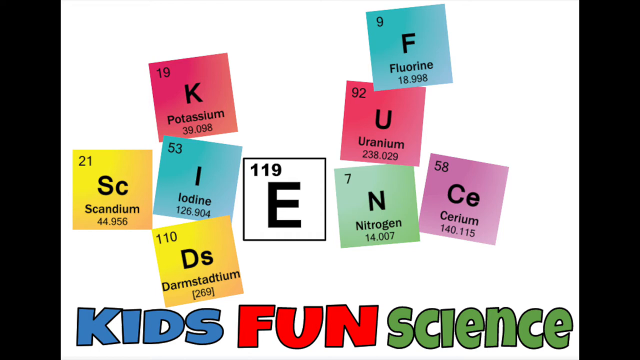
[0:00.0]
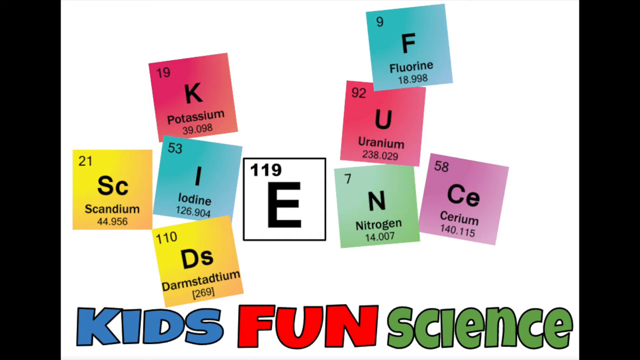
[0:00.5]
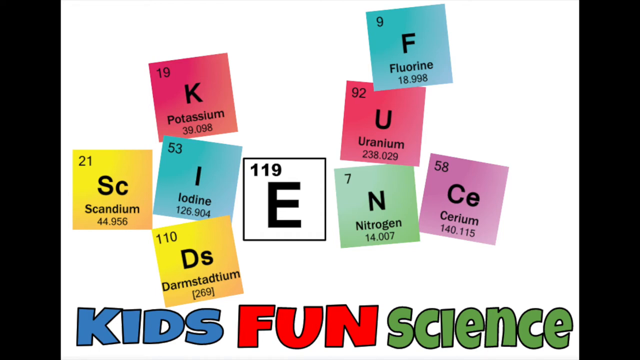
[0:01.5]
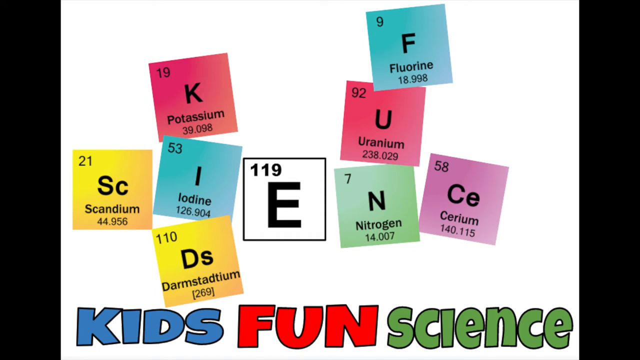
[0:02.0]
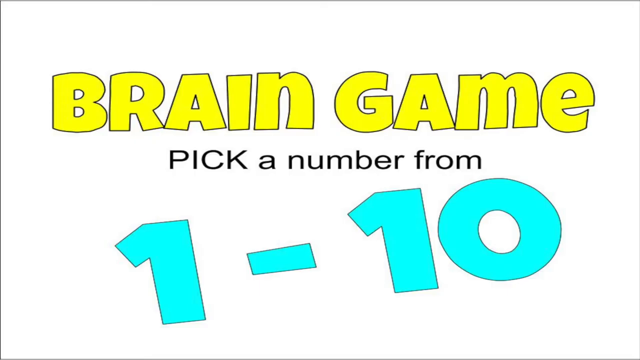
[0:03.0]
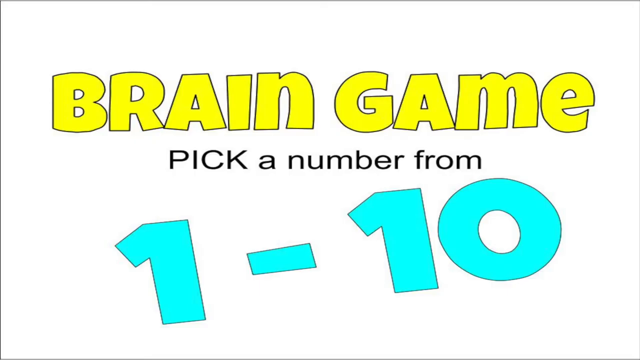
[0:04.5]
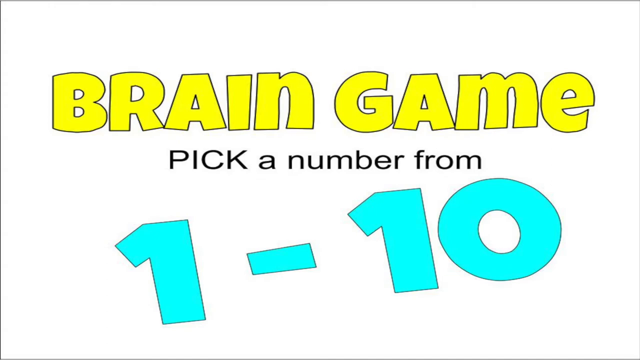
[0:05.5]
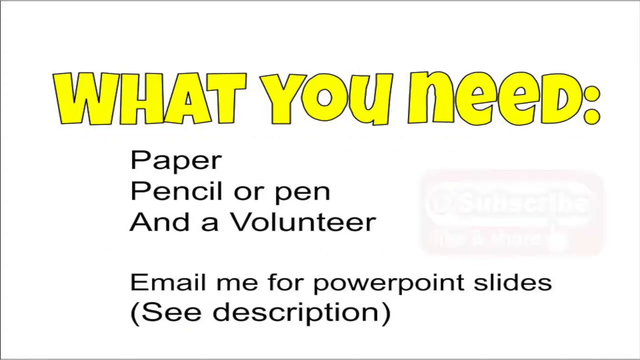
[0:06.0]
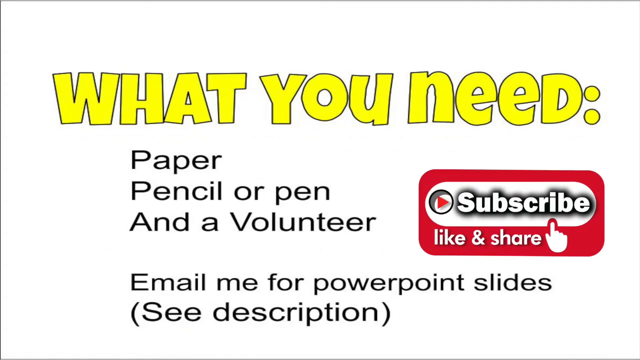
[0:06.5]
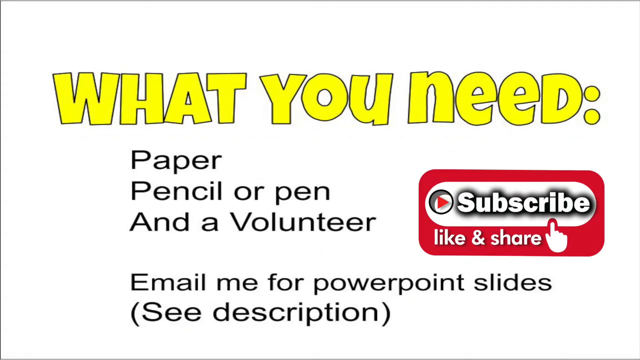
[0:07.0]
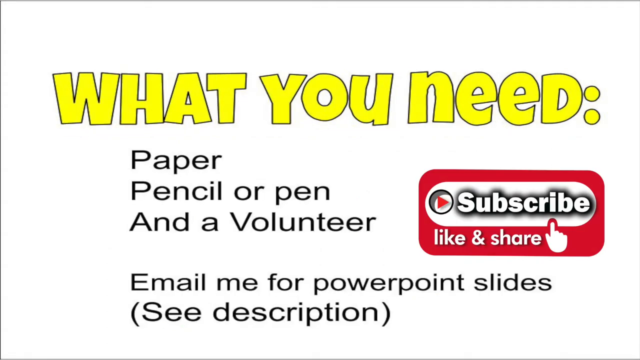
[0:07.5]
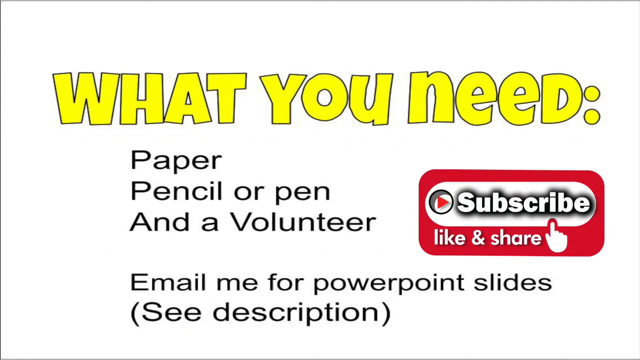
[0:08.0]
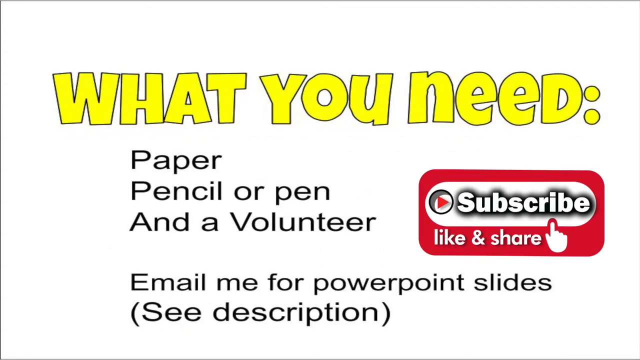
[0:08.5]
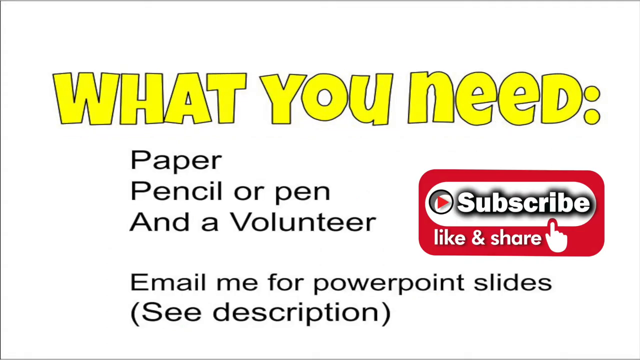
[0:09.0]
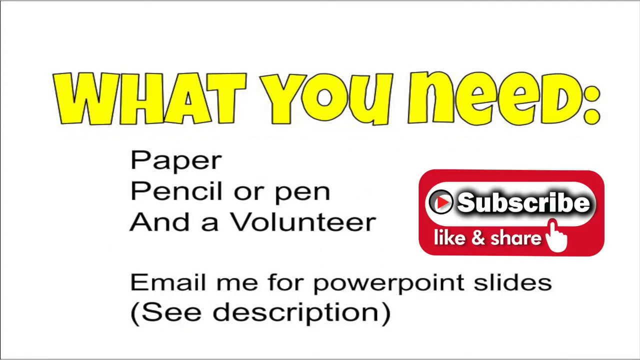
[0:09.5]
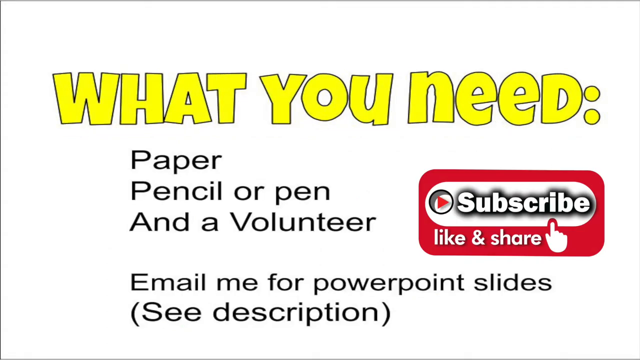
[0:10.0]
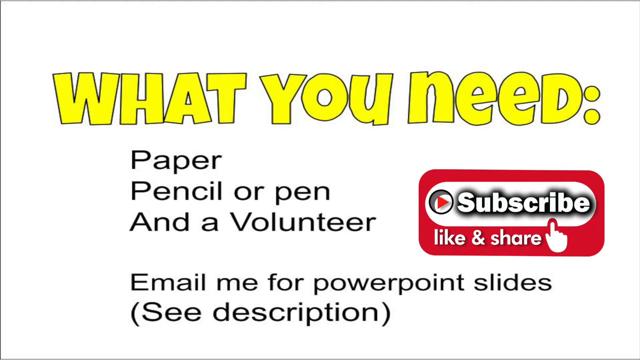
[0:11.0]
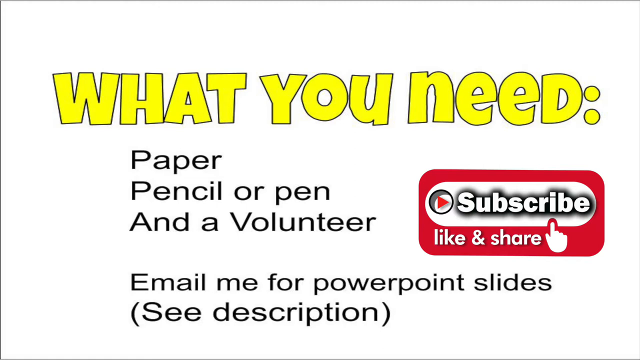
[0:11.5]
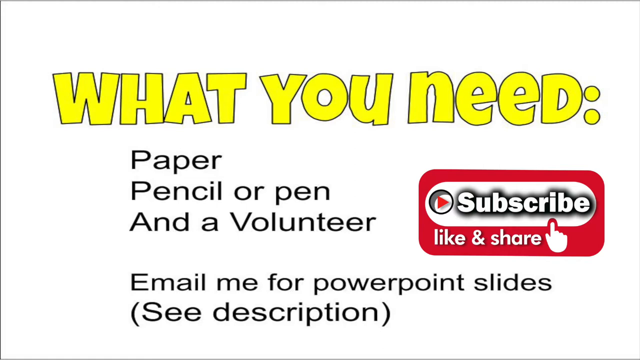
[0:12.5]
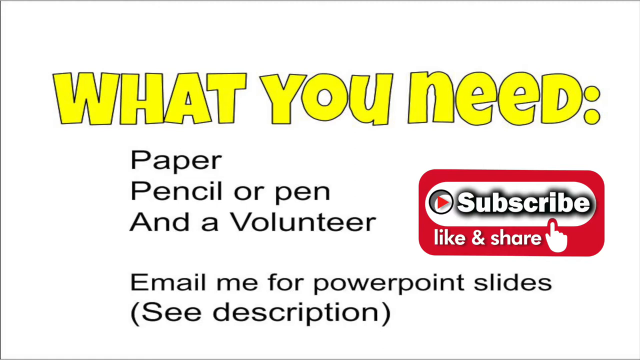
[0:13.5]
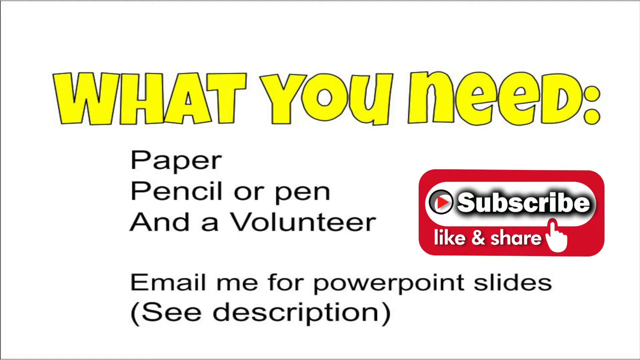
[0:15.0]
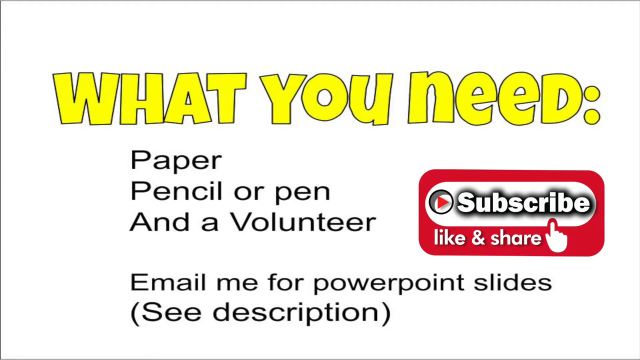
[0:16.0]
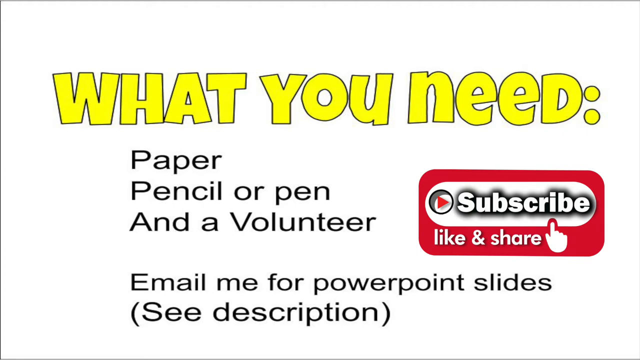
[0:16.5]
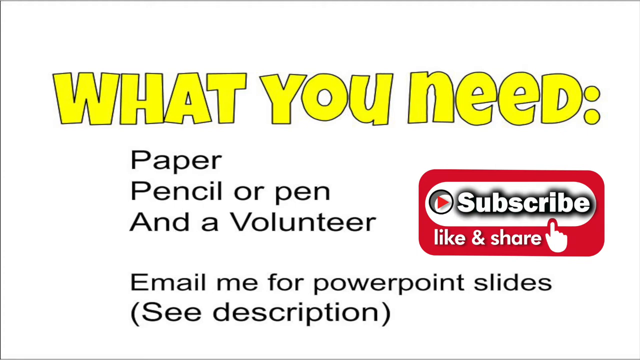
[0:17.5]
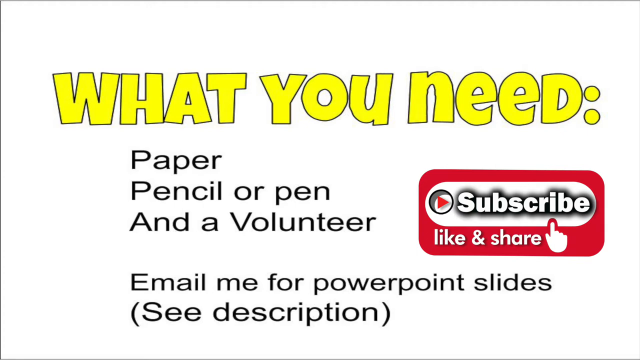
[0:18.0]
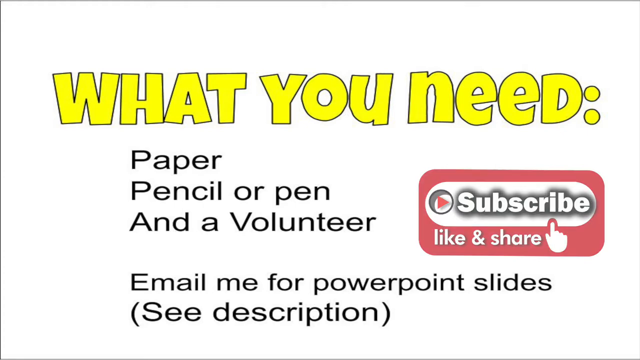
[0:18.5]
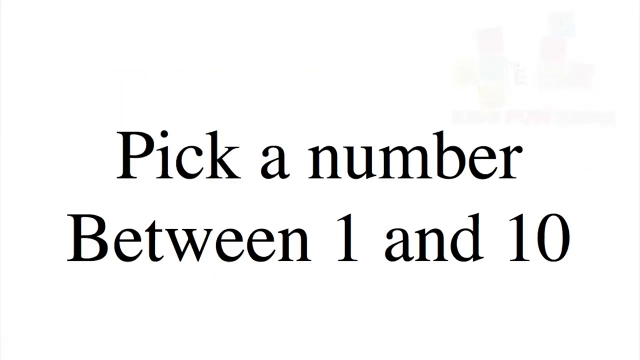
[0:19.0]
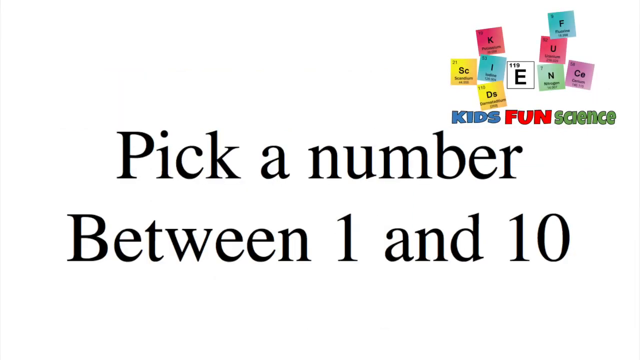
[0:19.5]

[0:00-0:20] The screen reads "Kids Fun Science" and shows a board covered with what look like post-its, with "science" spelled out across different post-its using element symbols: K for potassium, F for fluorine, U for uranium, Ce for cerium, and N for nitrogen. Text then reads "Brain Game. Pick a number from 1 through 10. What you need. Paper, pencil or pen, and a volunteer. Email me for PowerPoint slides. See description. Subscribe, like, and share. Thank you." Next, the screen reads "pick a number between 1 and 10," with "kids fun science" in the top corner. Everything is on colorful post-its.